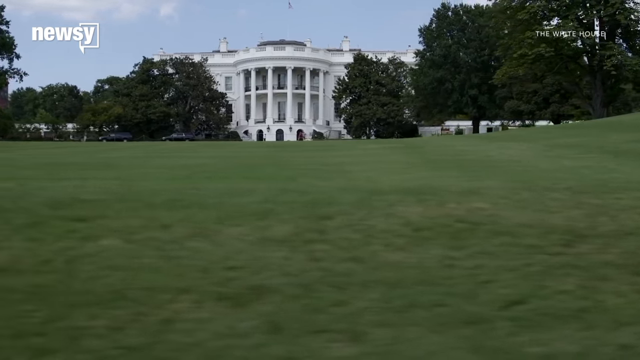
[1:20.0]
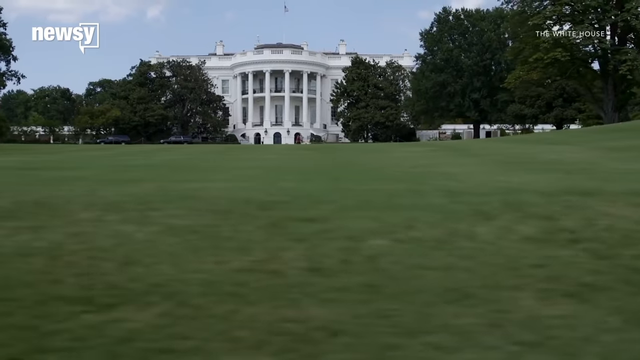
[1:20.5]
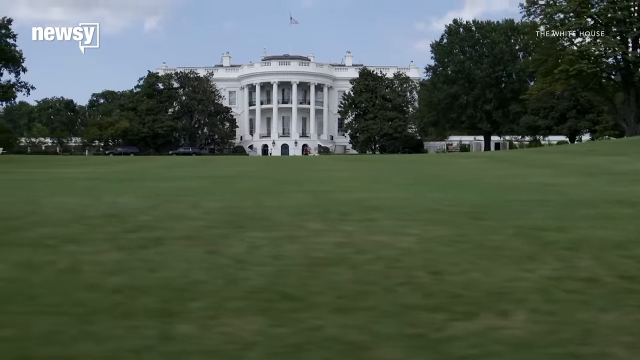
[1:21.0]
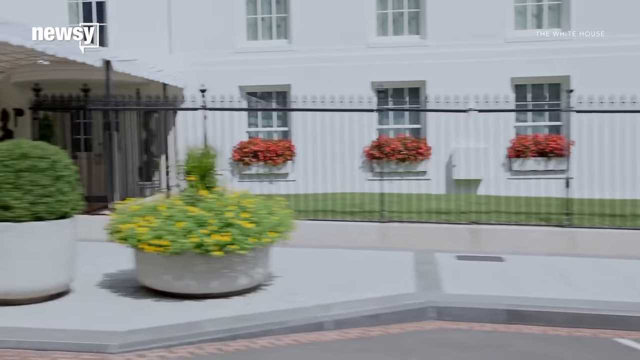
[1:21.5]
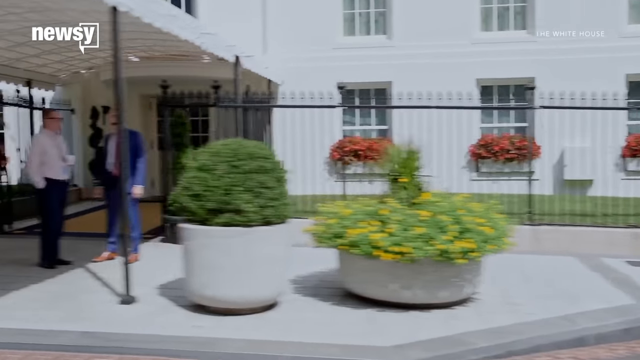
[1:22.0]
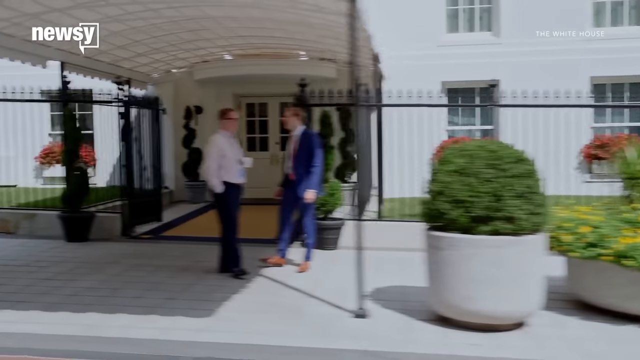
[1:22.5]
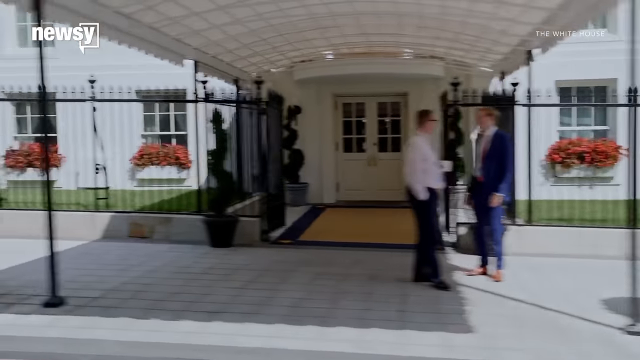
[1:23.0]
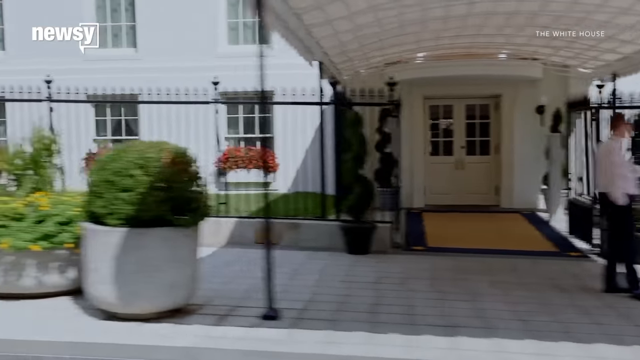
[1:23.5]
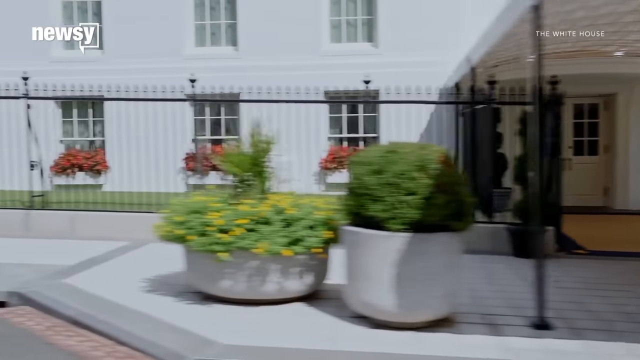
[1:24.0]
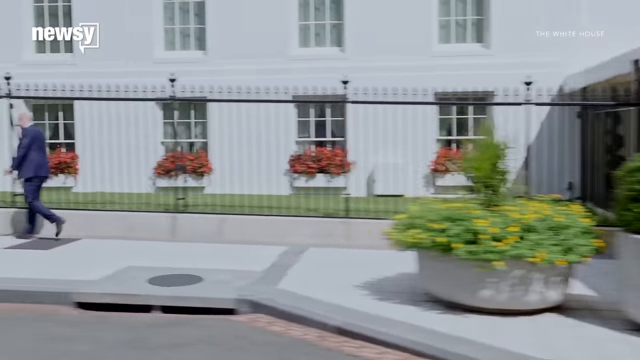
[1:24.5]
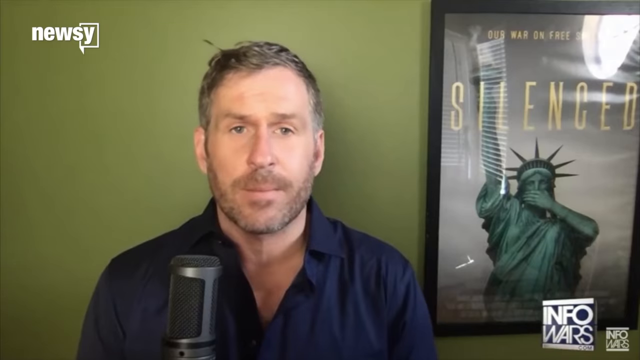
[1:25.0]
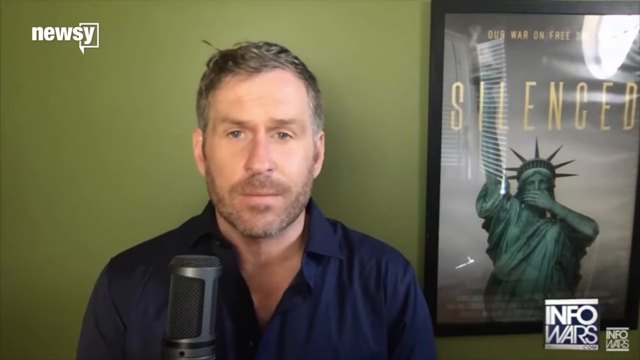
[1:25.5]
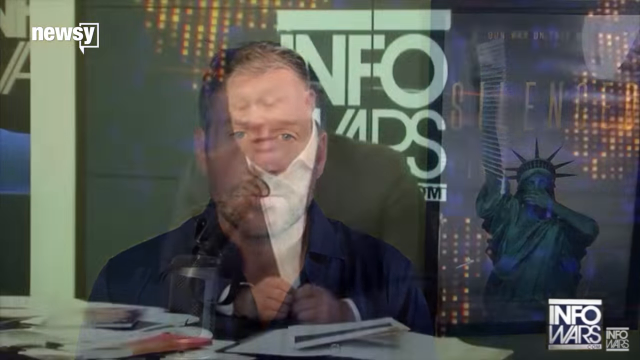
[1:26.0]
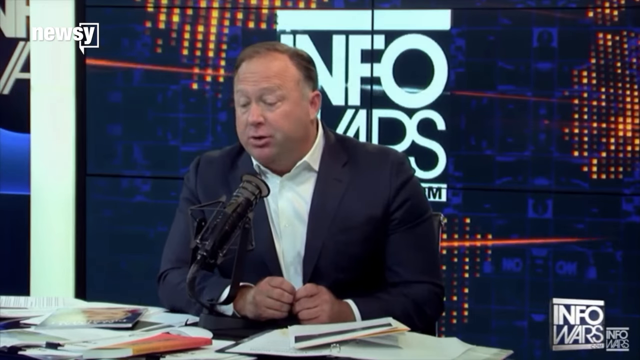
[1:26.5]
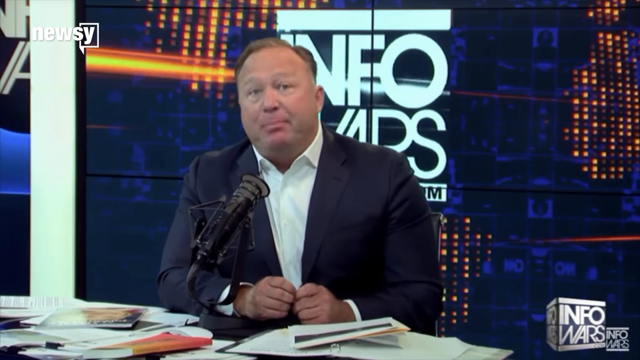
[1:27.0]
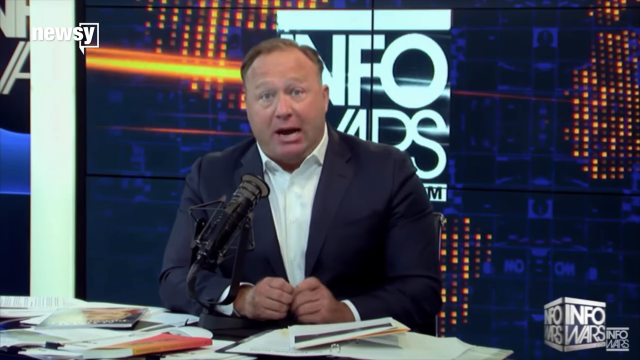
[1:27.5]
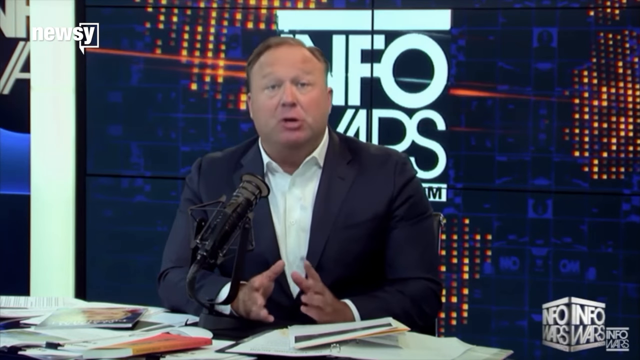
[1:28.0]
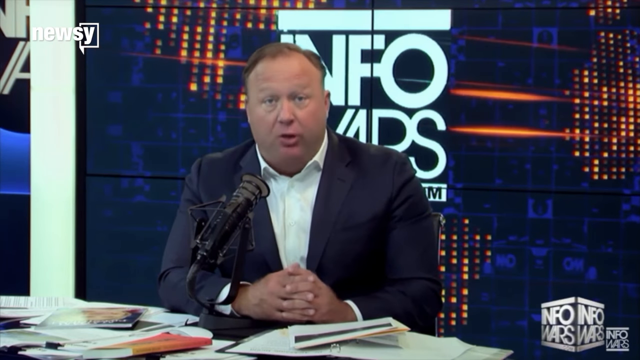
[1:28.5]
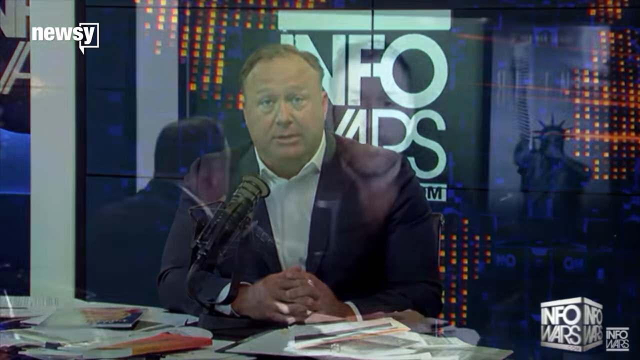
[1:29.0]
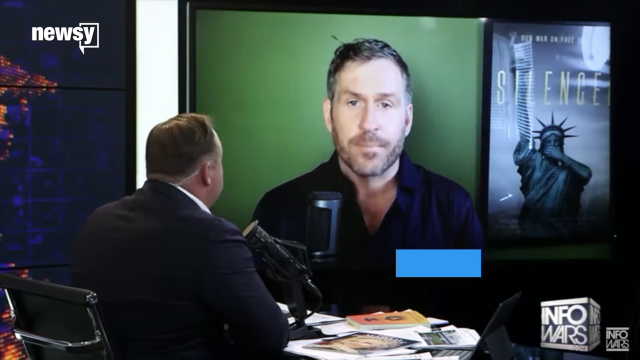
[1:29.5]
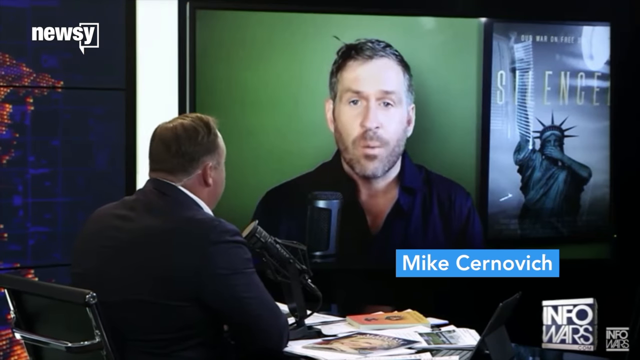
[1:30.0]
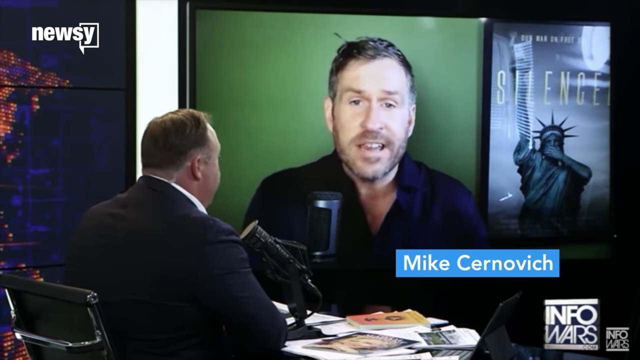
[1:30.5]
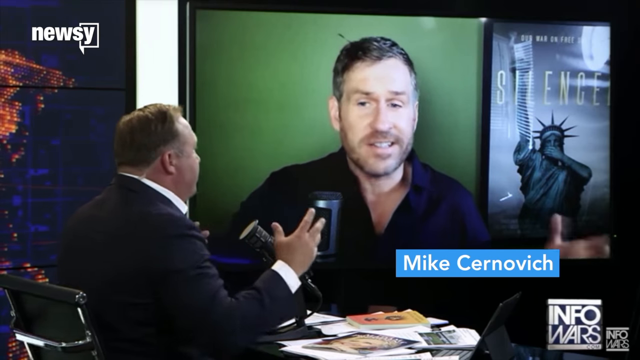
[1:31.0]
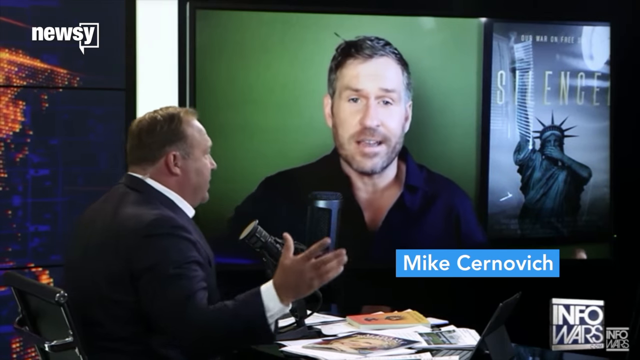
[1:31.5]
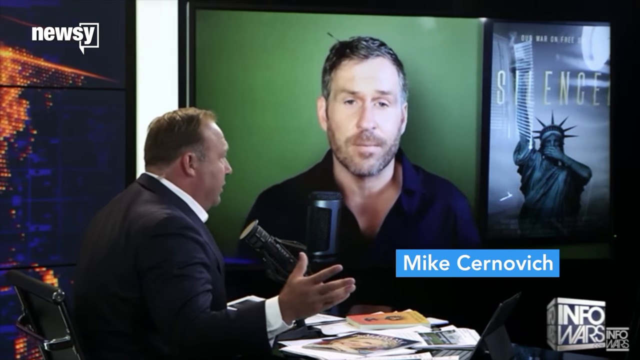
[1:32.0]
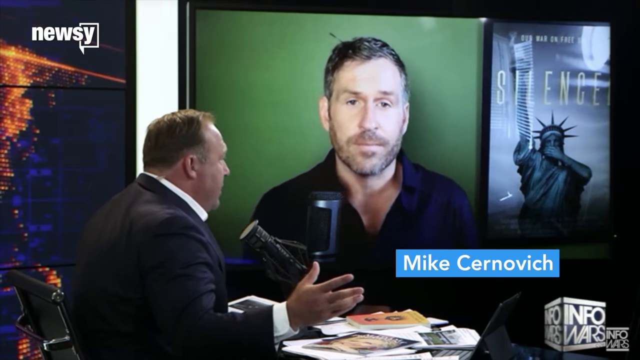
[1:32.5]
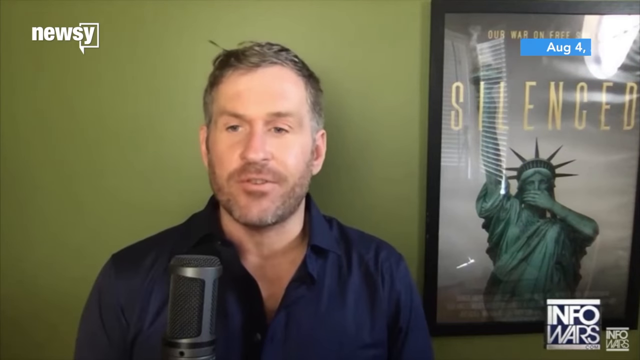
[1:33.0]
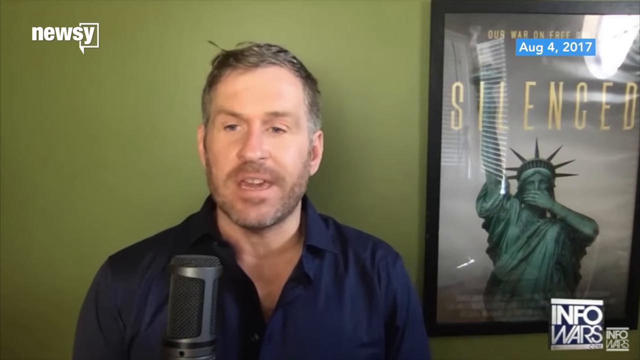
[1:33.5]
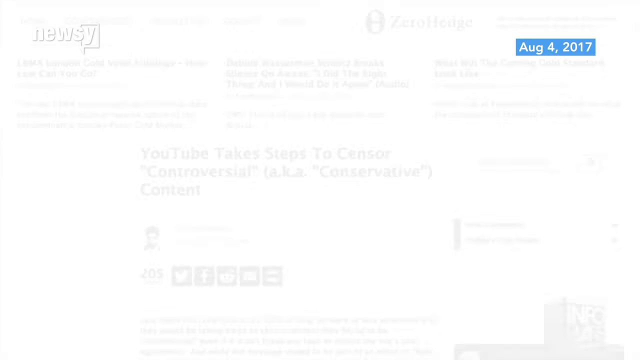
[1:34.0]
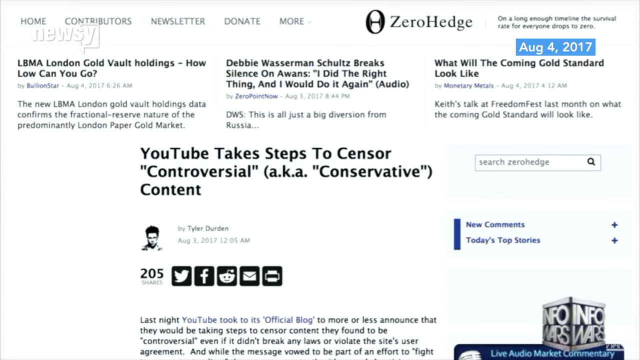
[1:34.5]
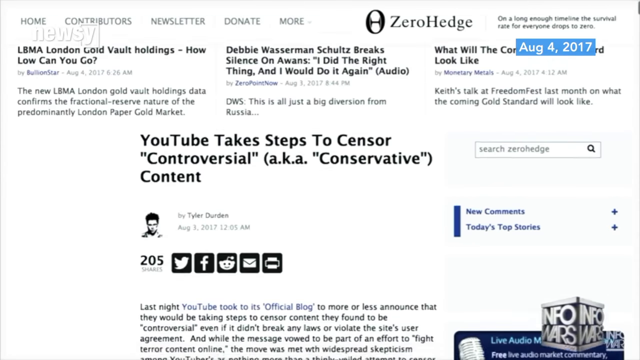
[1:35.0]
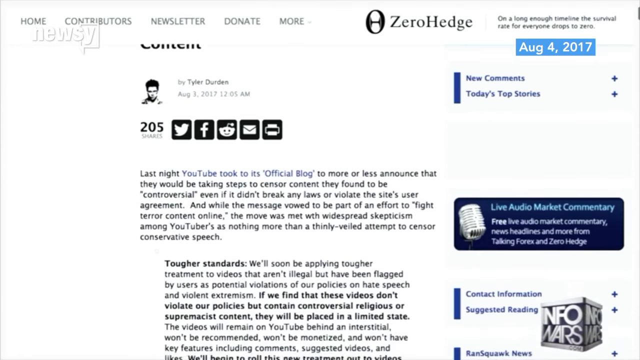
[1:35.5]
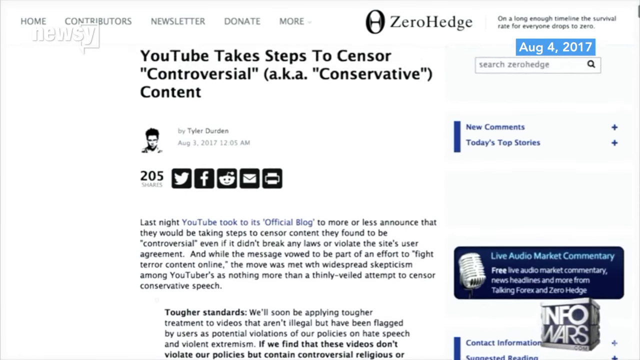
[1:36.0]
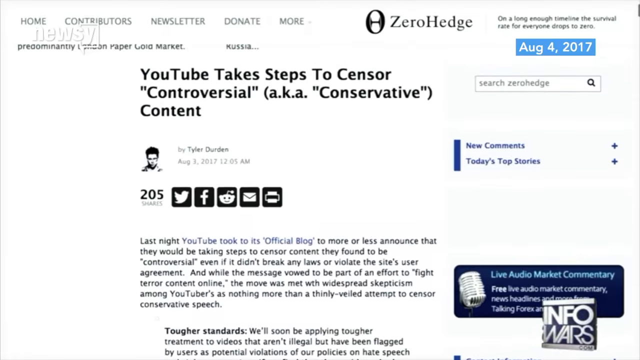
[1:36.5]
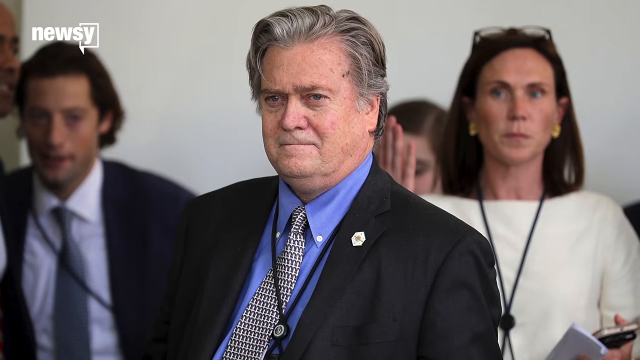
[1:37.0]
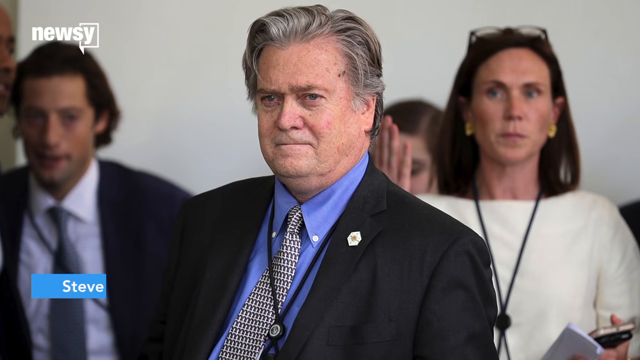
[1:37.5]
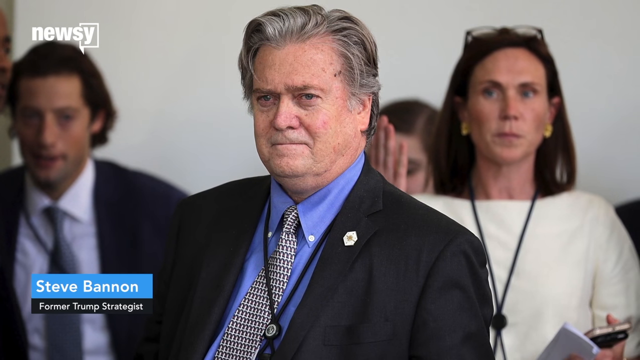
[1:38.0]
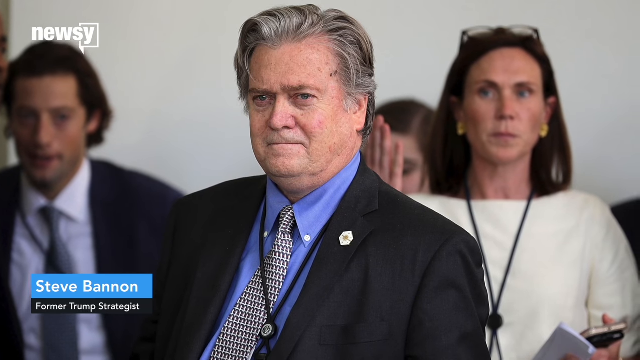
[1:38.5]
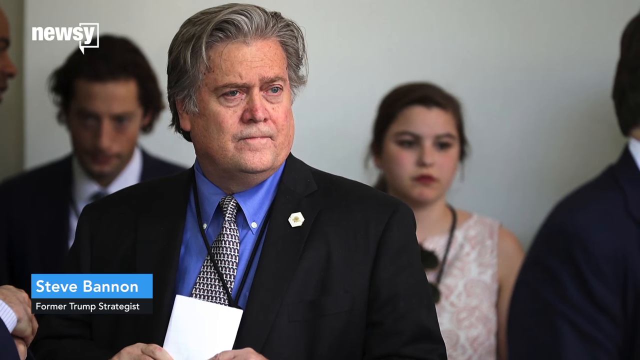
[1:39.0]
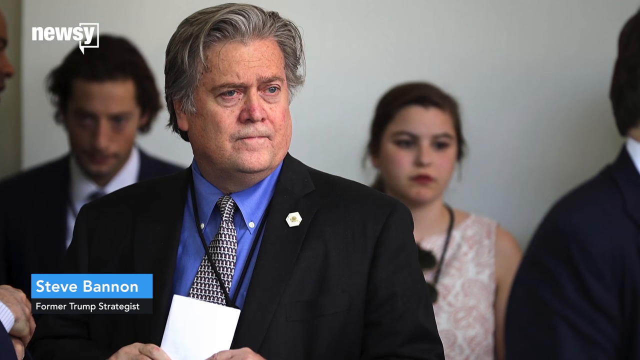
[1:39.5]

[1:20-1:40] "Newsy" appears in the upper left-hand corner, and in the upper right-hand corner, small, in front of a bunch of trees, white capital letters read "the White House." The White House occupies the whole middle portion at the top, the grass in front of it fills the lower portion, and there is a blue sky in the background. Someone is videoing the side of the White House, where there is a wrought iron fence. A man with a little facial hair and brown hair on top, wearing a blue shirt, sits in front of a green wall with a microphone in front of him. Beside him is a picture reading "silenced" in yellow capital letters, showing the Statue of Liberty holding up one arm with her other arm over her mouth, as if silencing her. A man in front of the words "Info Wars," Mike Cernovich, talks to the man in front of the green wall. The date "August 14th, 2017" appears, and an article comes up titled "YouTube takes steps to censor controversial aka conservative content," with some paragraphs. A Caucasian man with gray hair appears, wearing a lanyard around his neck, a blue dress shirt, a black and white tie and a black suit coat. Underneath him it says "Steve Bannon" and "former Trump strategist."